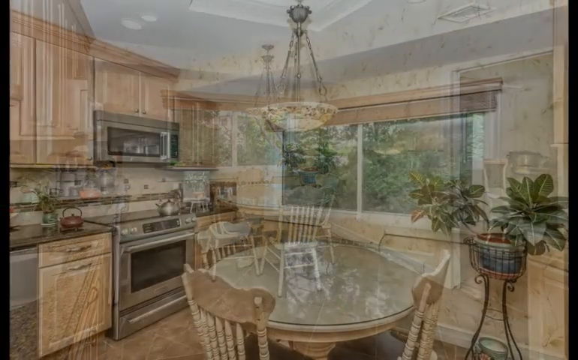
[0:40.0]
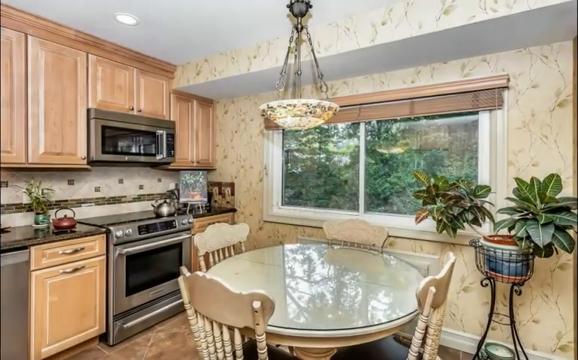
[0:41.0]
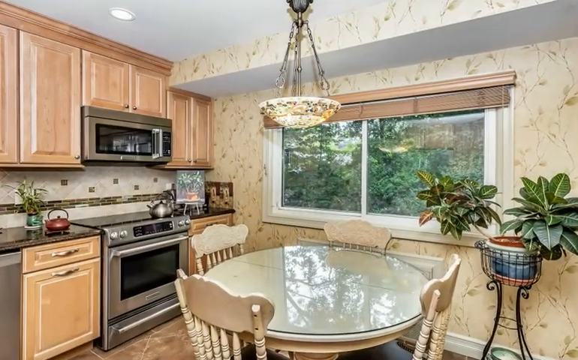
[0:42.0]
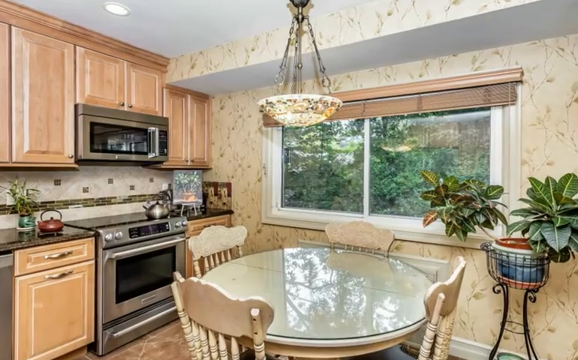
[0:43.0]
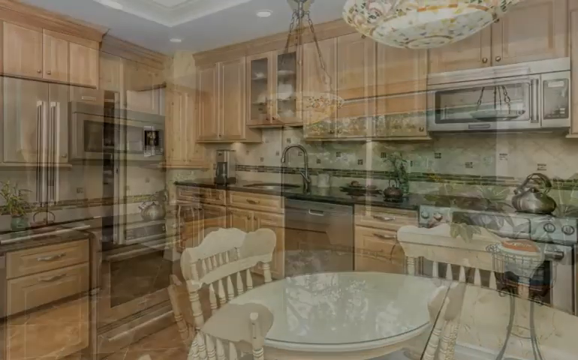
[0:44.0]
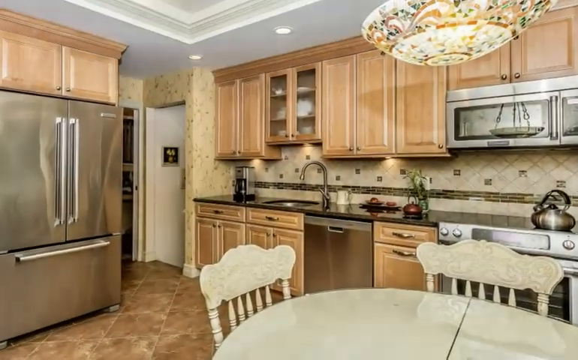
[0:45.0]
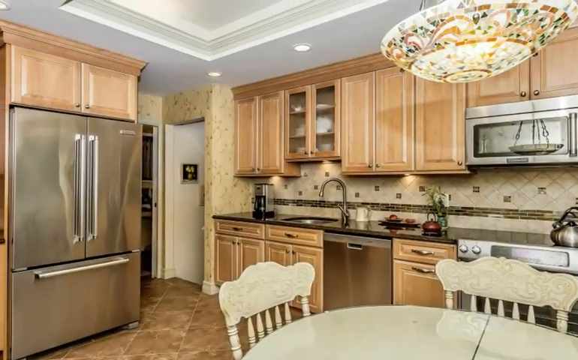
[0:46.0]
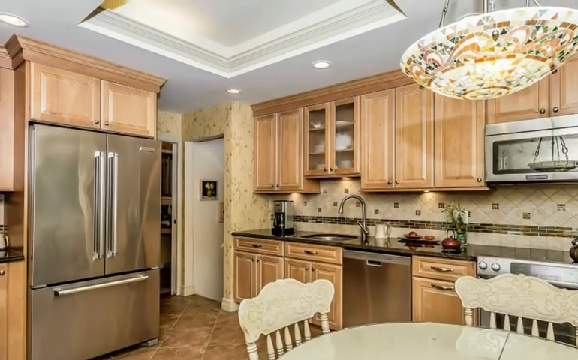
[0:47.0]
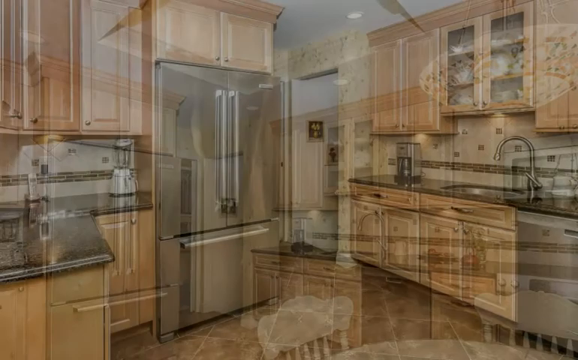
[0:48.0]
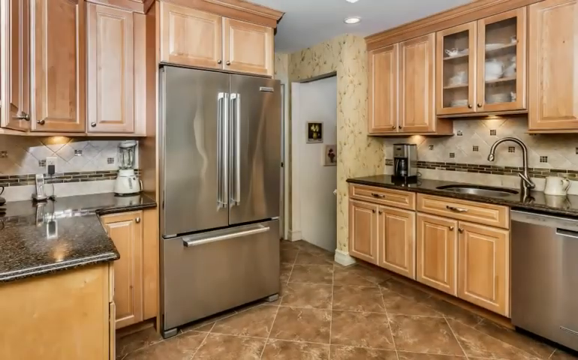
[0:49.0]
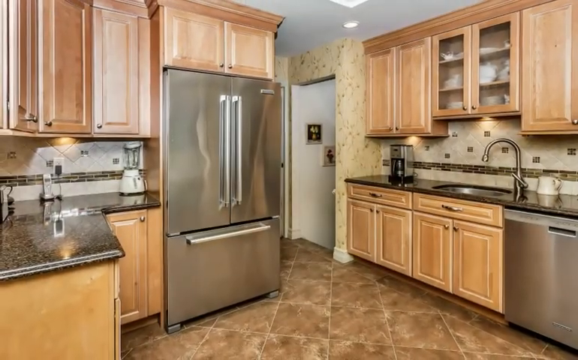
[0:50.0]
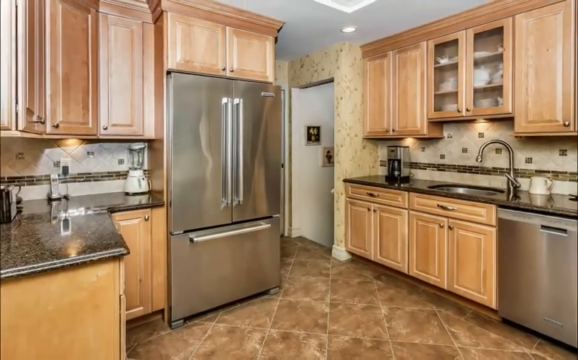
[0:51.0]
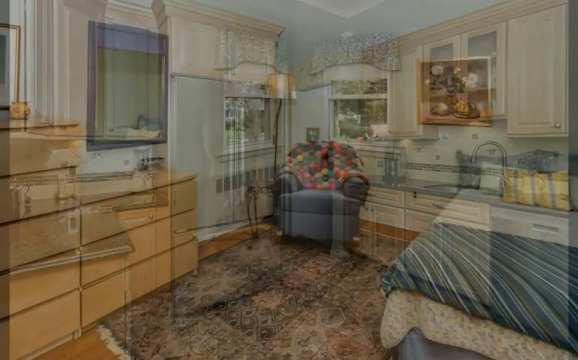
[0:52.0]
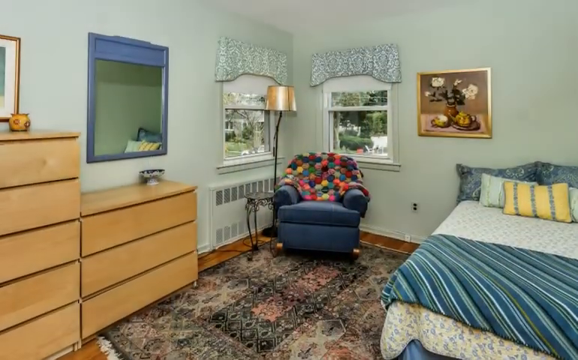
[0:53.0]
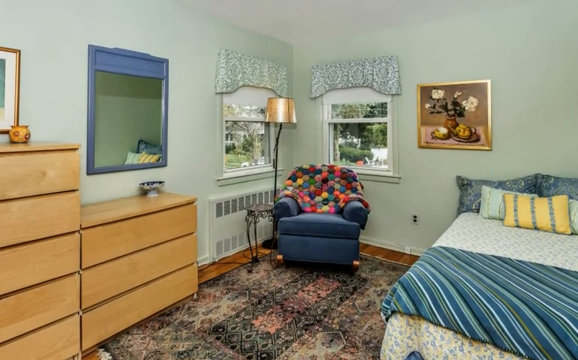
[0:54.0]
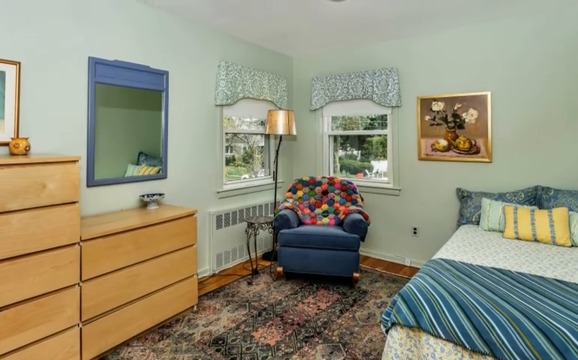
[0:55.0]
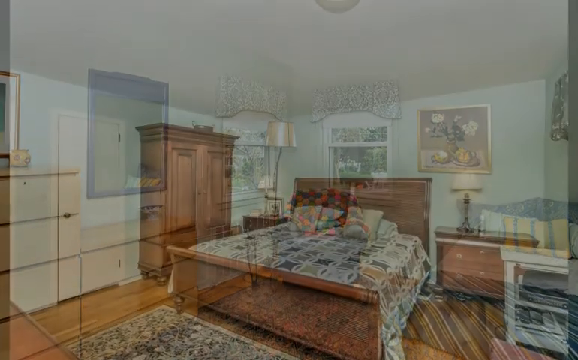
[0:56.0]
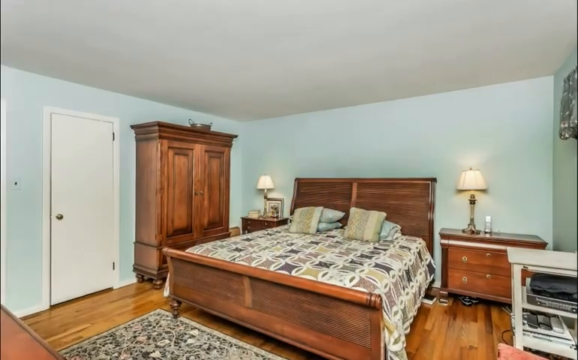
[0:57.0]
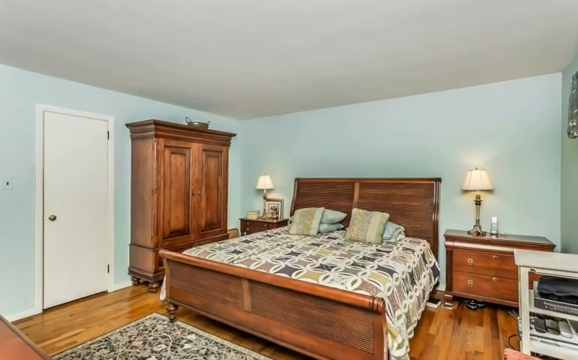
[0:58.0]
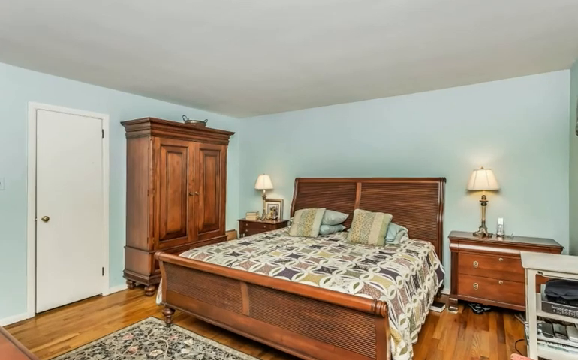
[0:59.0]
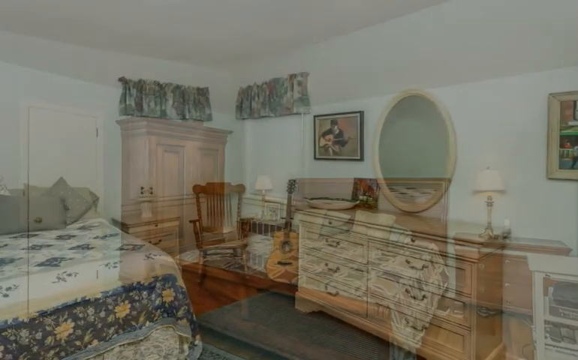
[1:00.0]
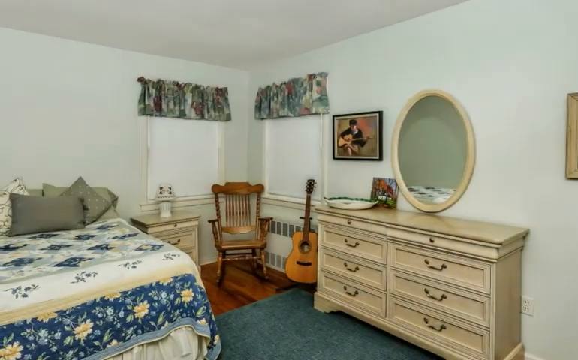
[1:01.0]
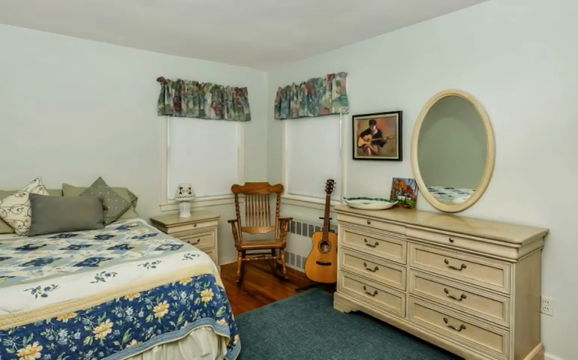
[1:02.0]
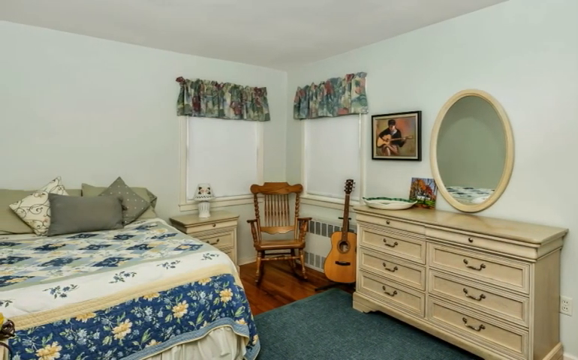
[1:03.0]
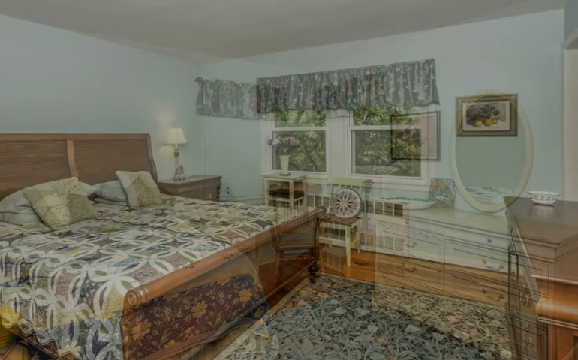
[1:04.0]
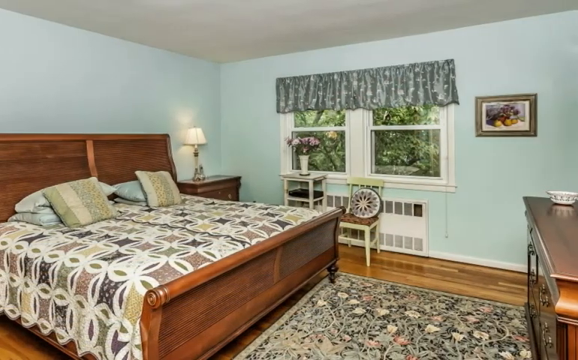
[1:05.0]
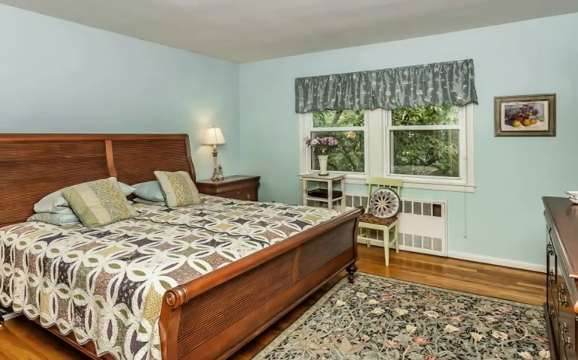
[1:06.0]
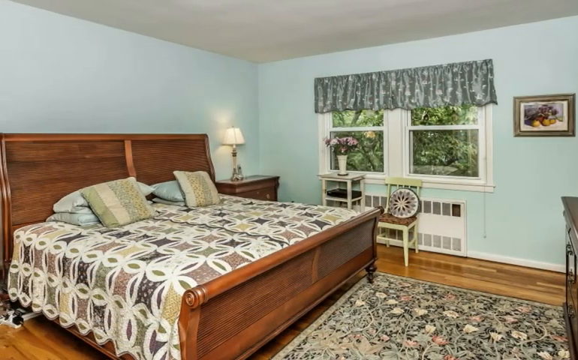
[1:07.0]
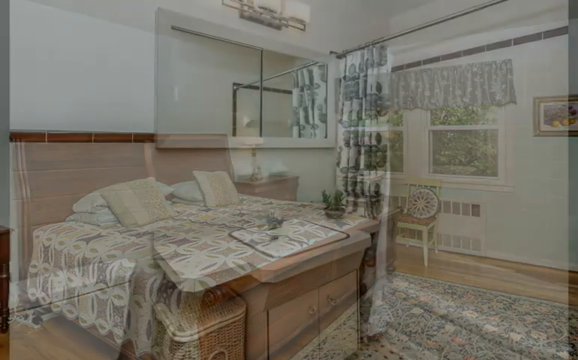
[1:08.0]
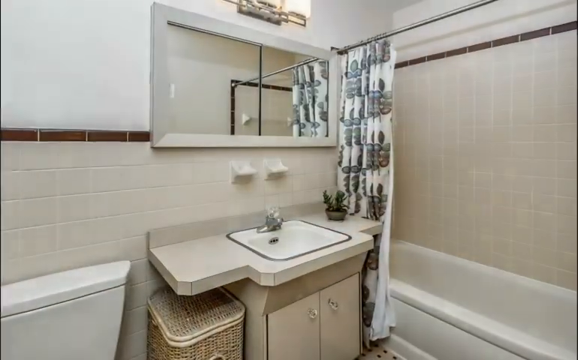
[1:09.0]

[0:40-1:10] The kitchen area of the home is shown. On the far right side of the room, the walls are covered in off-white wallpaper with beige blooming flowers and beige stems designed all over it. On this side of the room there is a blue, white, and terracotta planter on a black wrought iron stand, holding two green houseplants. A large rectangular window lets in lots of natural sunlight and is covered by a beige mini blind. On the other side of the room, the cabinets are walnut-finished wood, and a stainless steel built-in microwave is above the stainless steel stove.